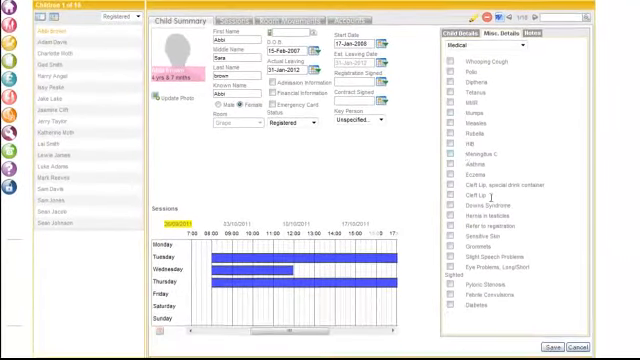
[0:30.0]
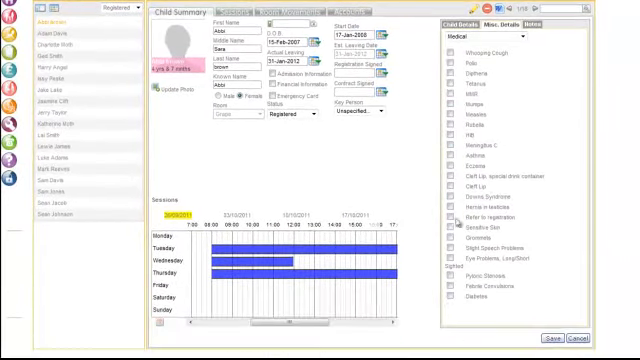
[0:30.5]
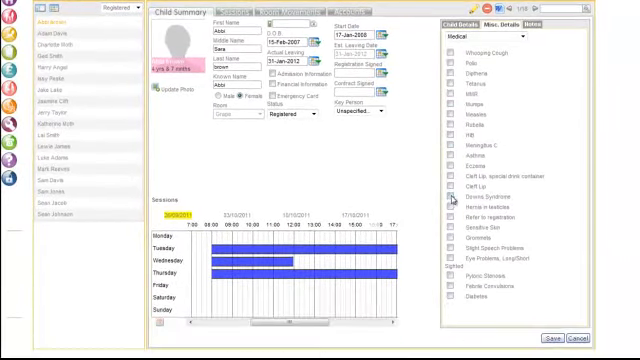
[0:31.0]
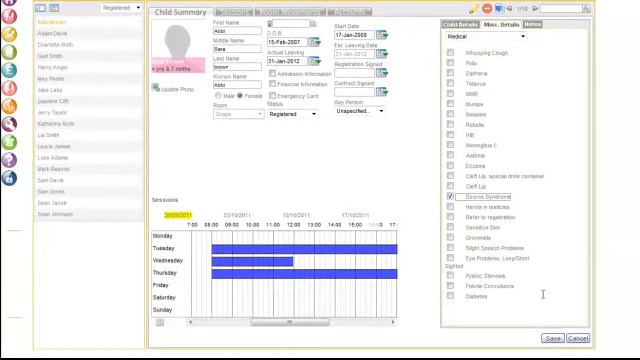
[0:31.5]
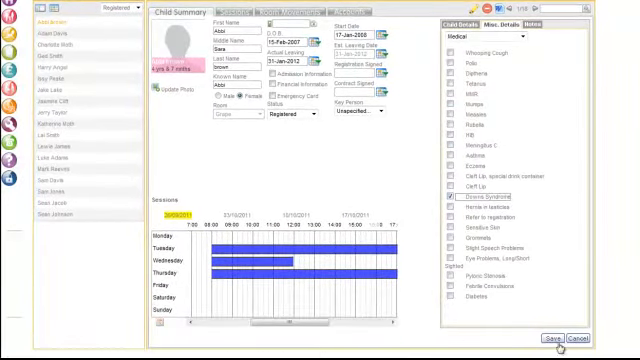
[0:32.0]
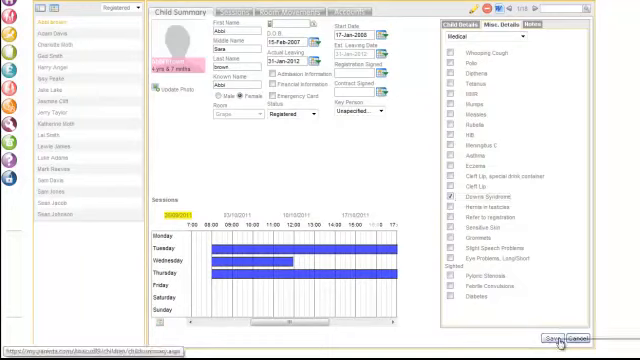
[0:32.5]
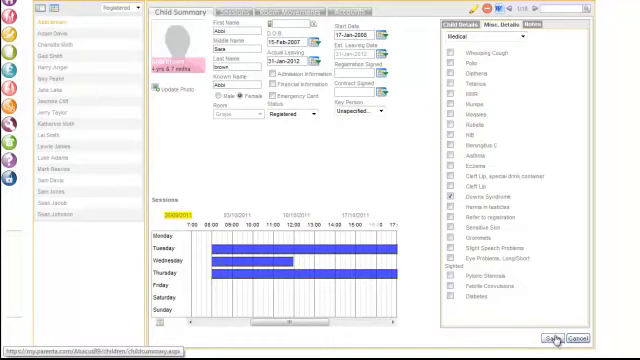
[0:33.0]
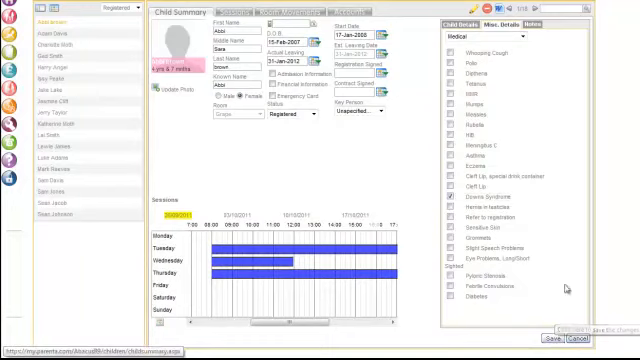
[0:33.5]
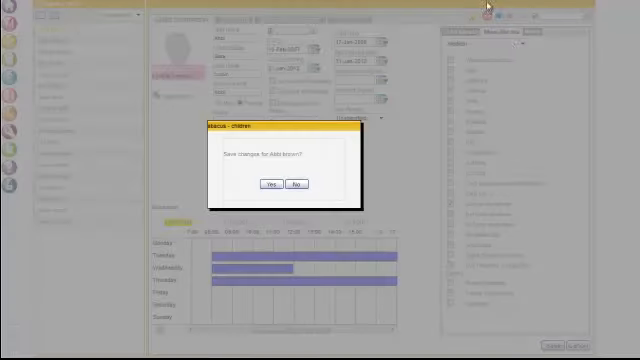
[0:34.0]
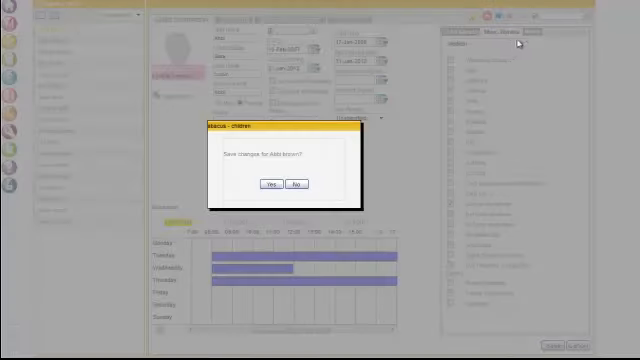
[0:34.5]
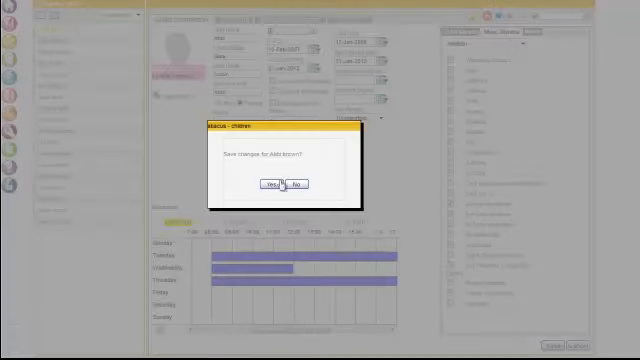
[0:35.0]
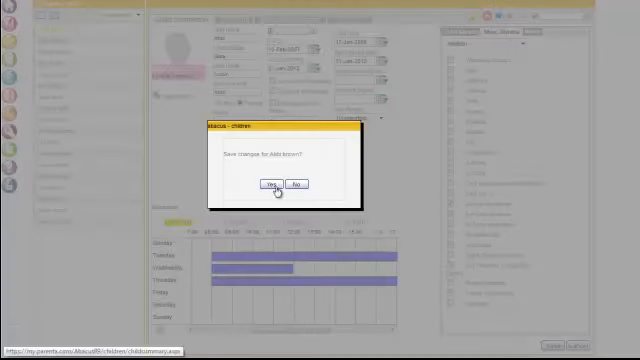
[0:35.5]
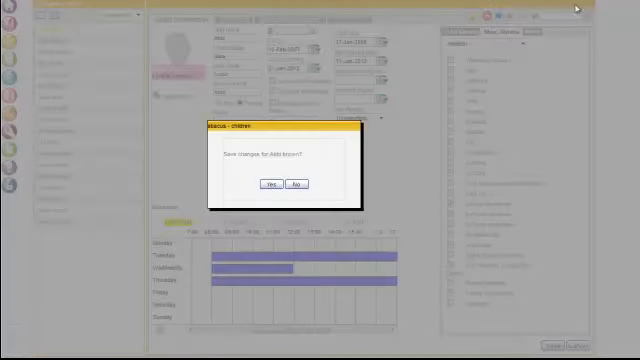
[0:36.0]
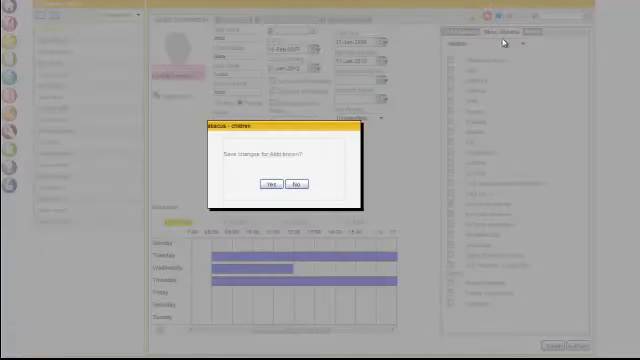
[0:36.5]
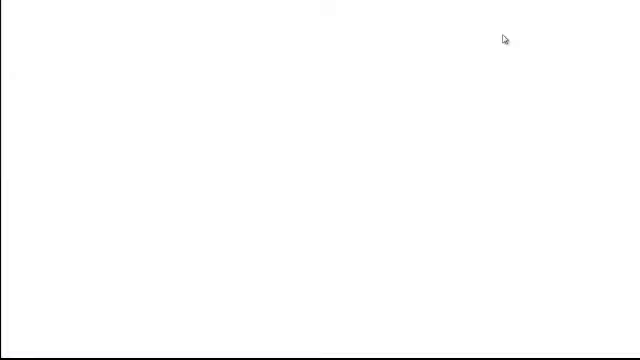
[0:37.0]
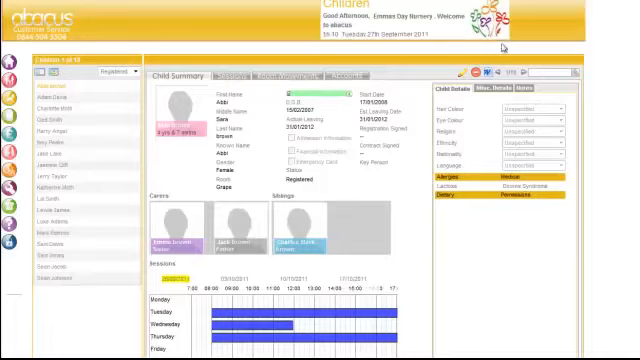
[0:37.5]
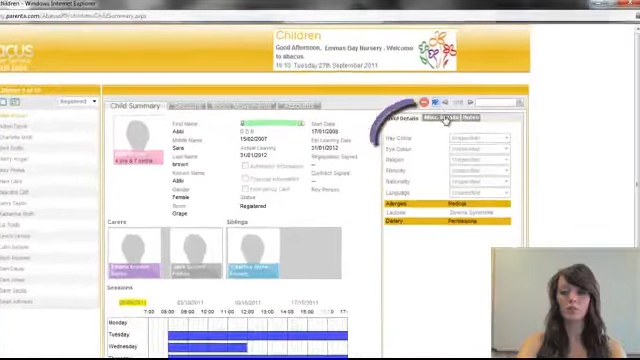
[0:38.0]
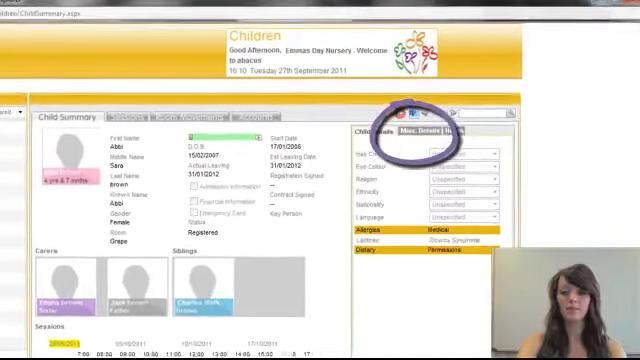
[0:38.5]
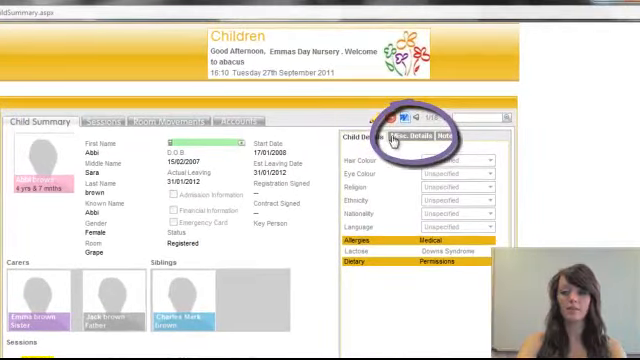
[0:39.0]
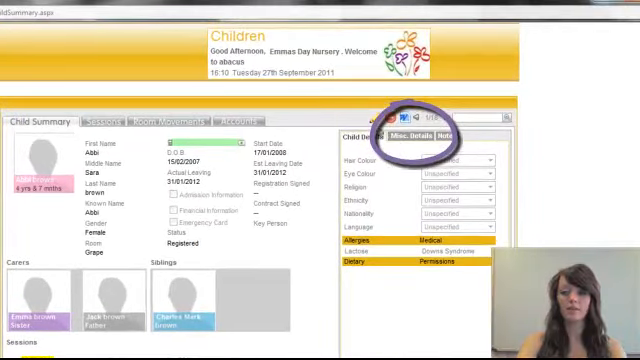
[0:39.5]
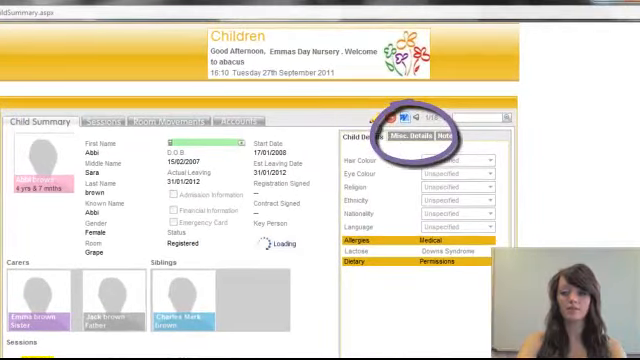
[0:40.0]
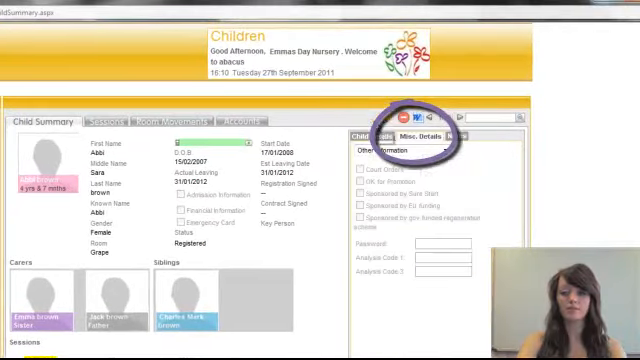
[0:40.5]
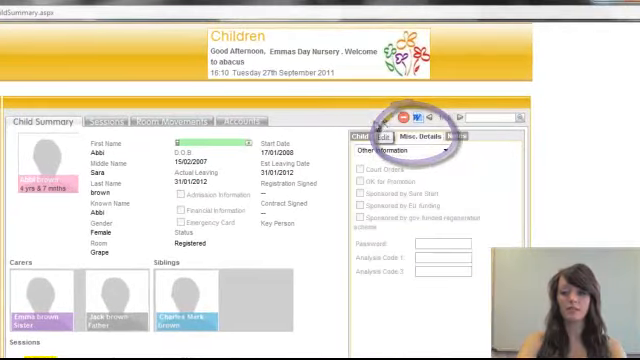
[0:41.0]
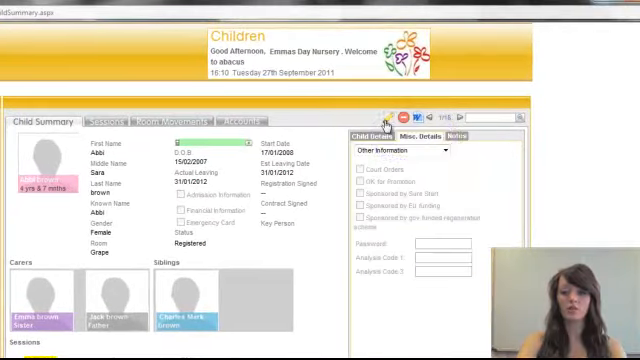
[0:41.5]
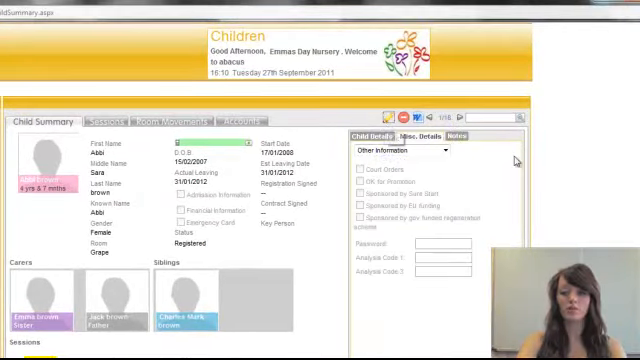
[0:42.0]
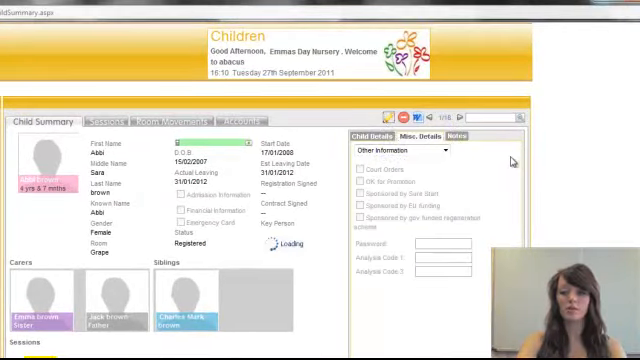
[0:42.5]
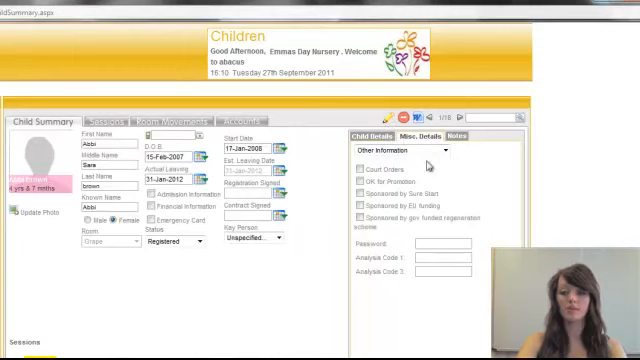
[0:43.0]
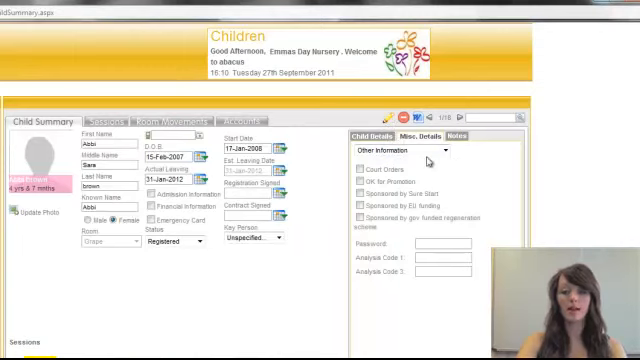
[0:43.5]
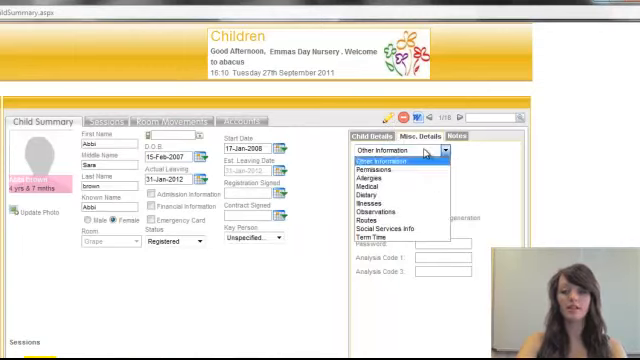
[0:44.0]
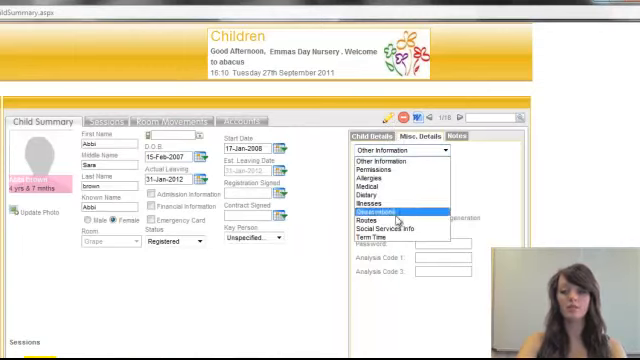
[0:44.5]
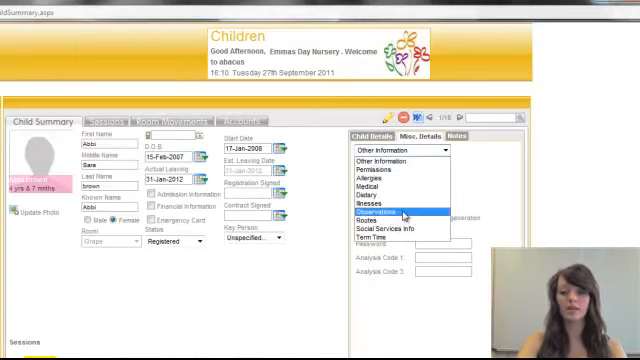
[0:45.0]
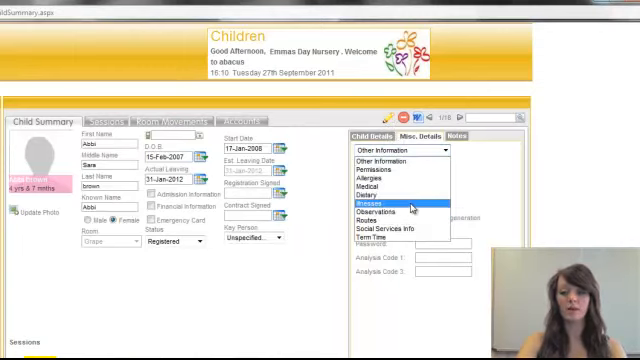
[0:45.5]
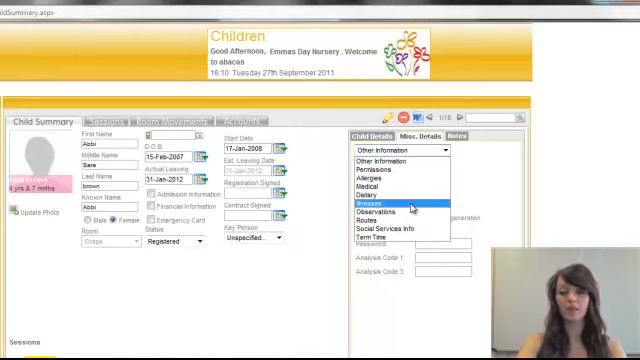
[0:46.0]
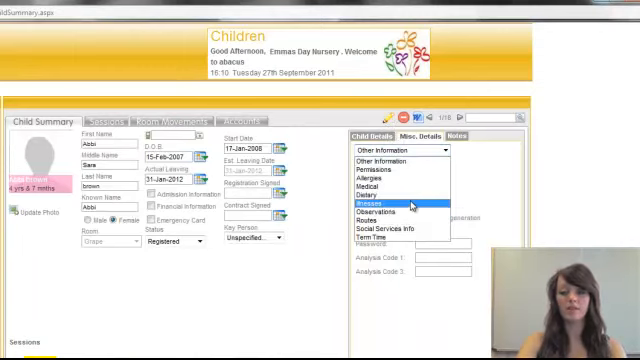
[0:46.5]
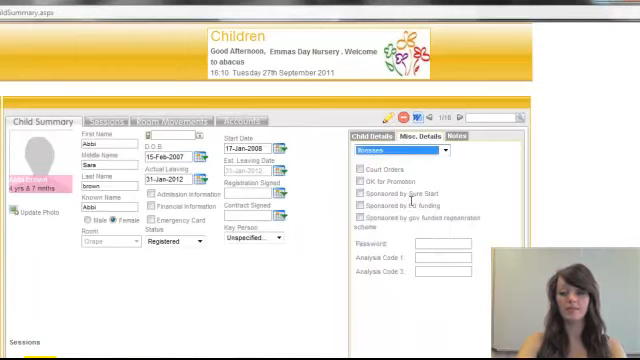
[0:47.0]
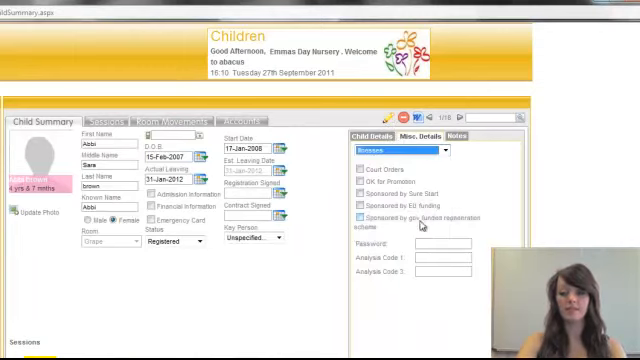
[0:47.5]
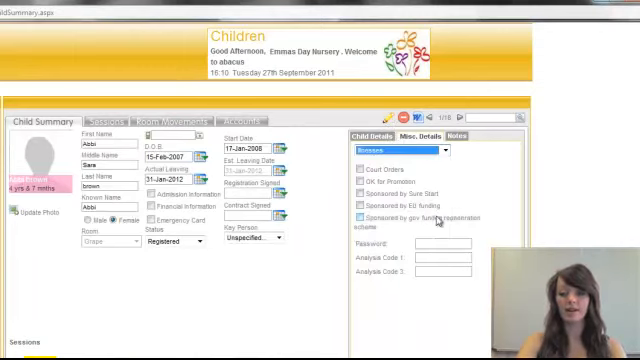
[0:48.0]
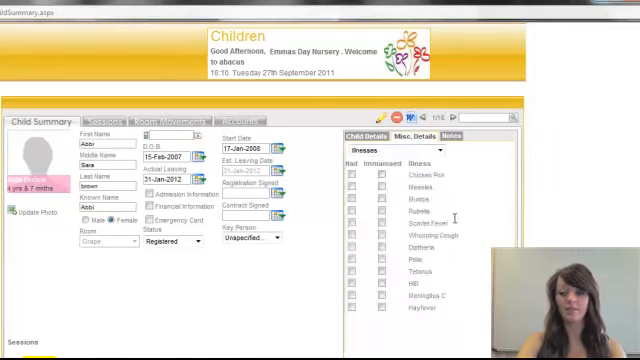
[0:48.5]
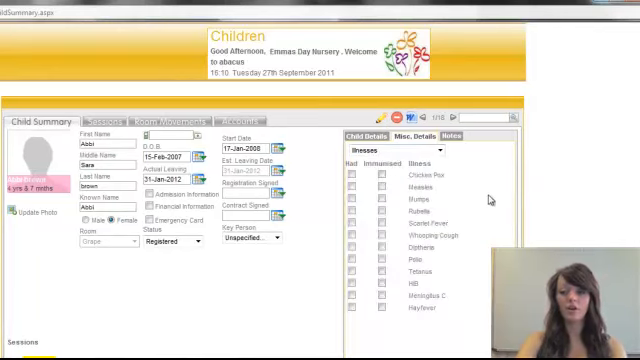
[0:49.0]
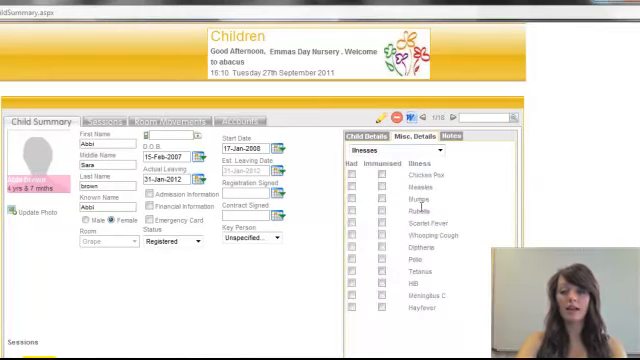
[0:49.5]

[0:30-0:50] The woman makes changes in the medical details table. It has a list of options to choose from, including polio, eczema and comments, which are illnesses of the children. She chooses Down syndrome and saves the details, and a message with questions appears about saving details for Abby Brown; she apparently chooses the option yes. Then the medical details appear again, and she clicks the pencil edit icon and chooses illnesses, where there are checkboxes.